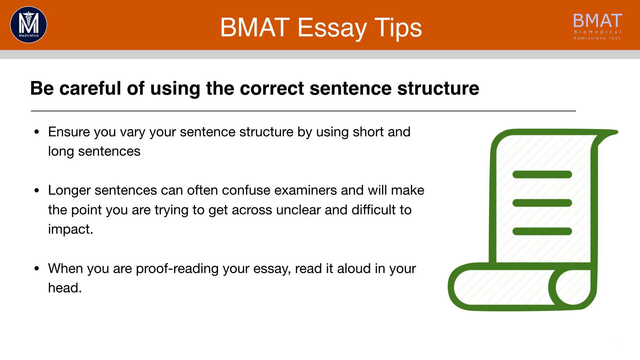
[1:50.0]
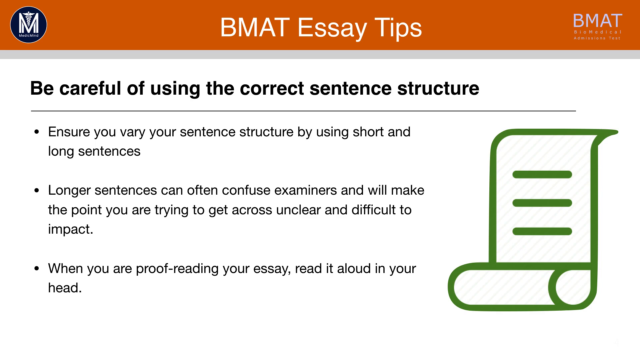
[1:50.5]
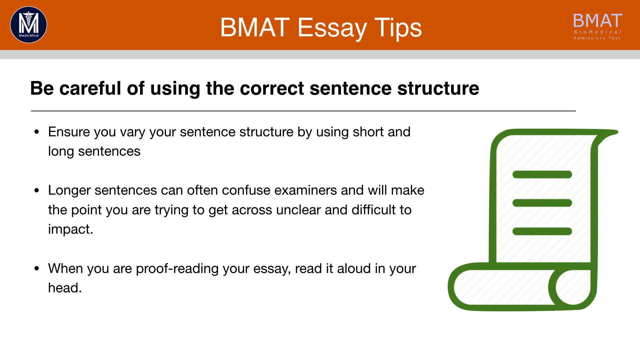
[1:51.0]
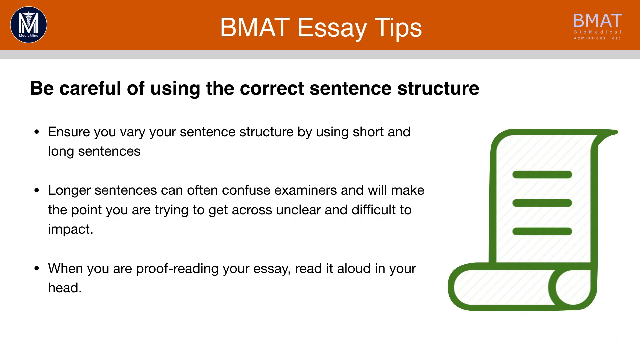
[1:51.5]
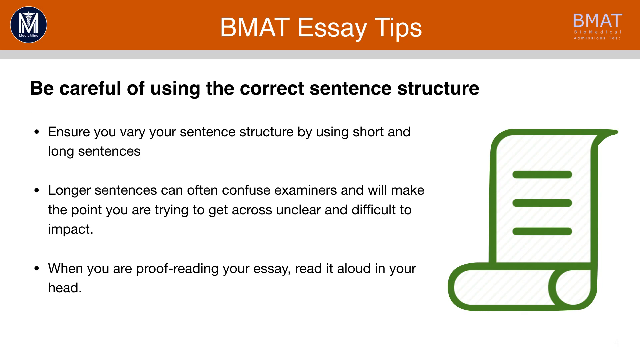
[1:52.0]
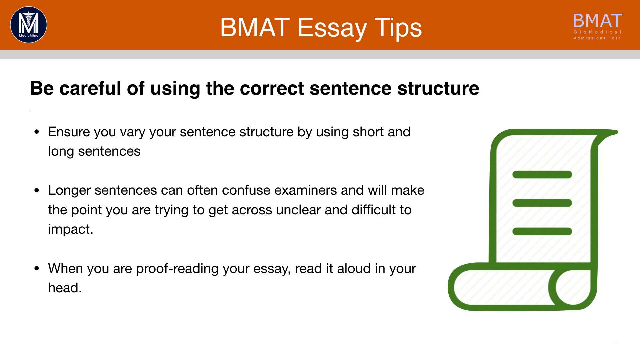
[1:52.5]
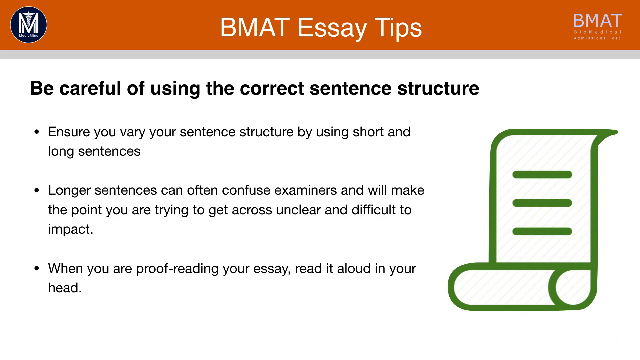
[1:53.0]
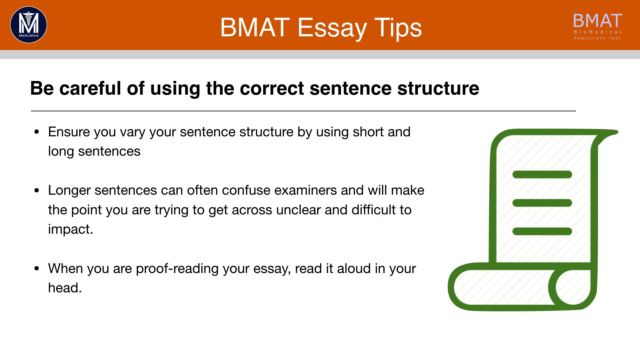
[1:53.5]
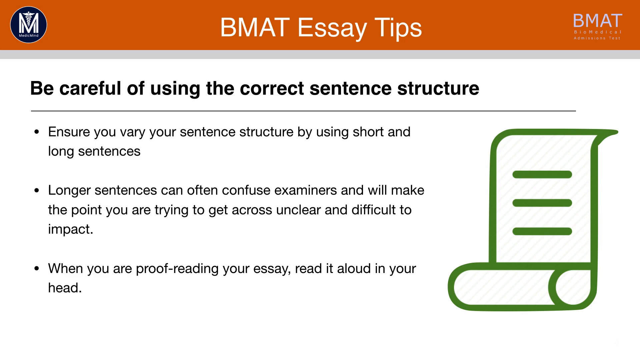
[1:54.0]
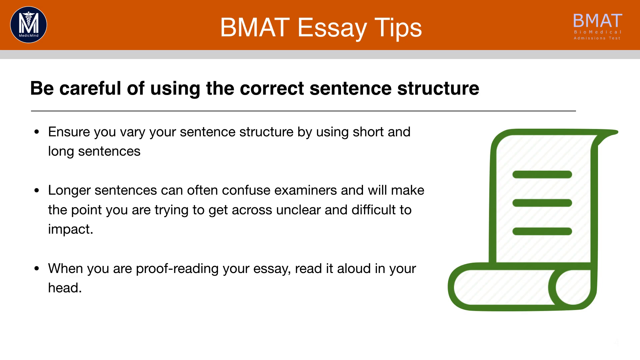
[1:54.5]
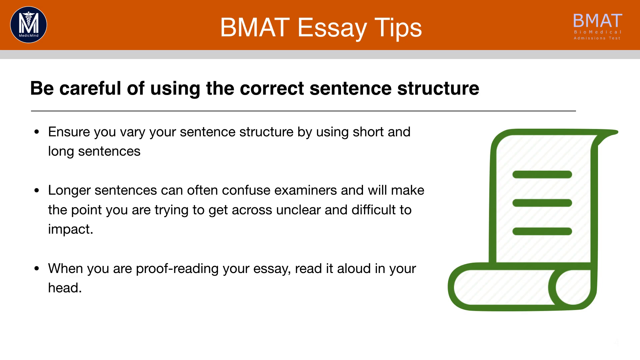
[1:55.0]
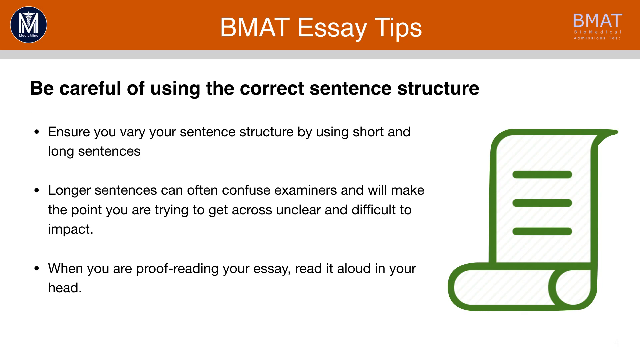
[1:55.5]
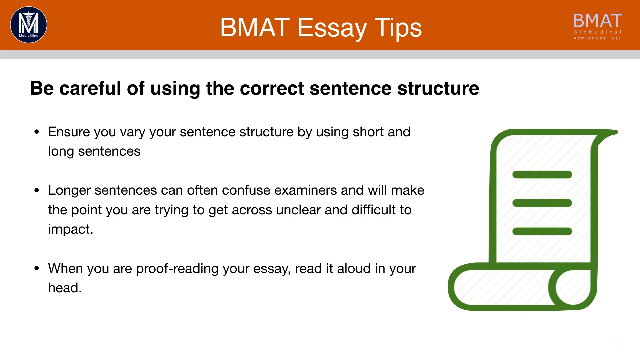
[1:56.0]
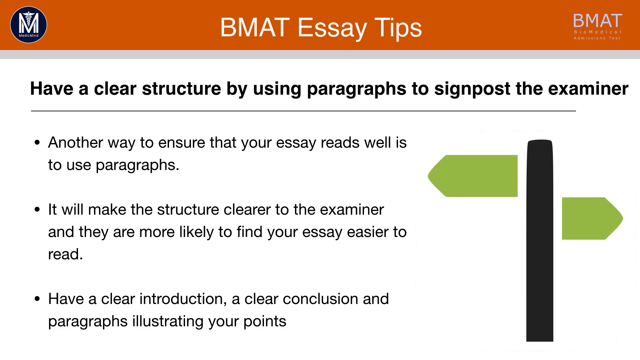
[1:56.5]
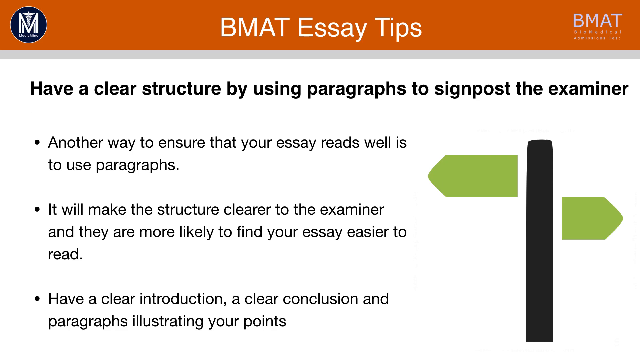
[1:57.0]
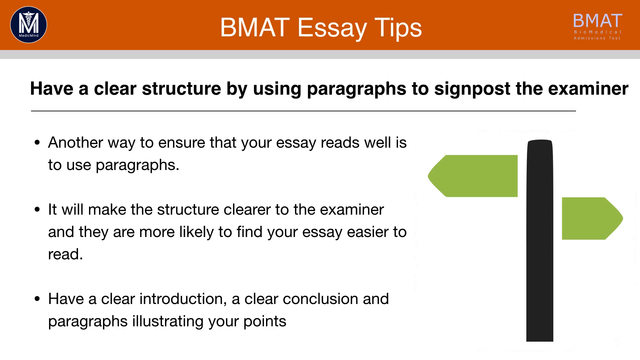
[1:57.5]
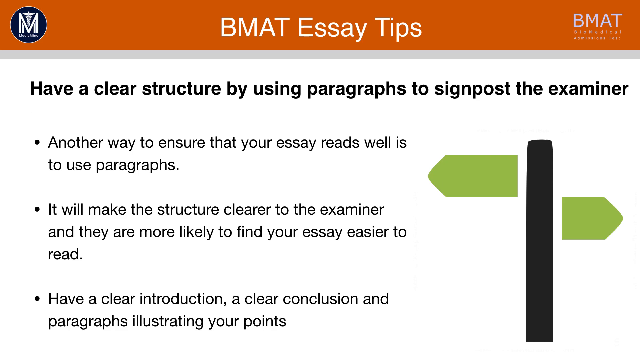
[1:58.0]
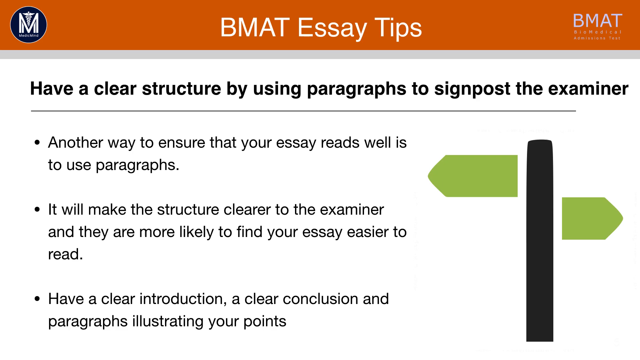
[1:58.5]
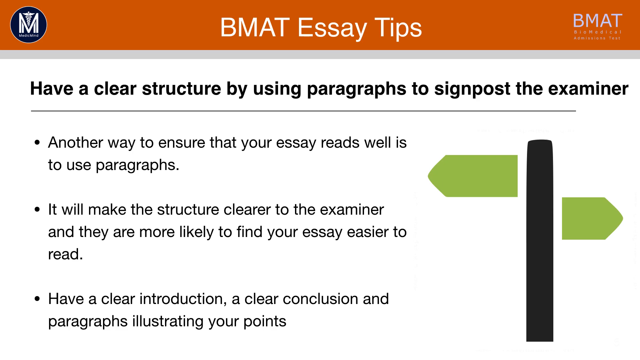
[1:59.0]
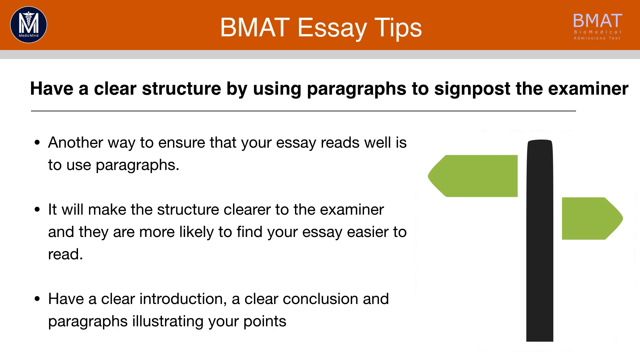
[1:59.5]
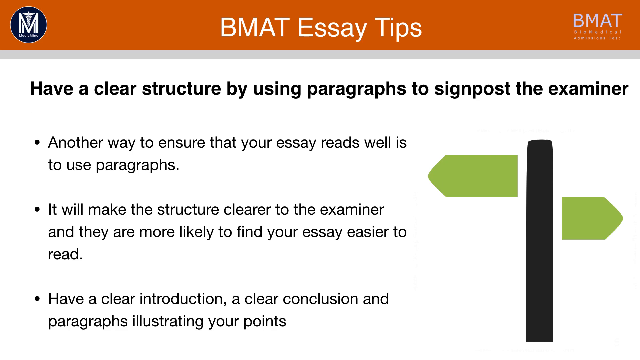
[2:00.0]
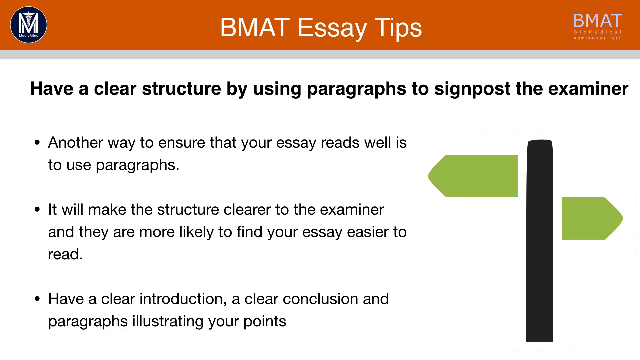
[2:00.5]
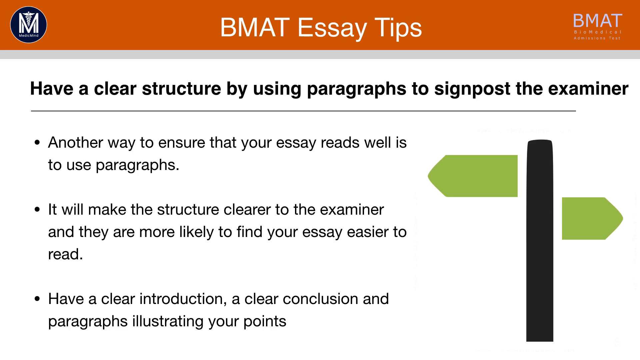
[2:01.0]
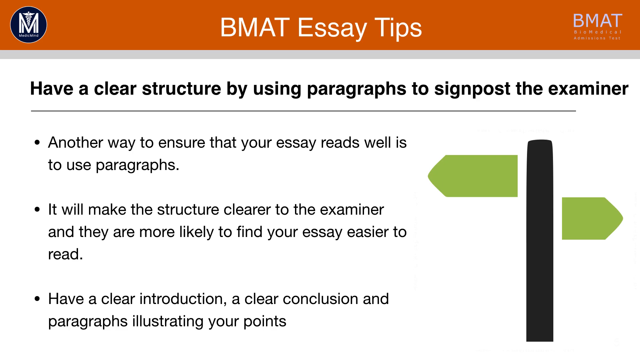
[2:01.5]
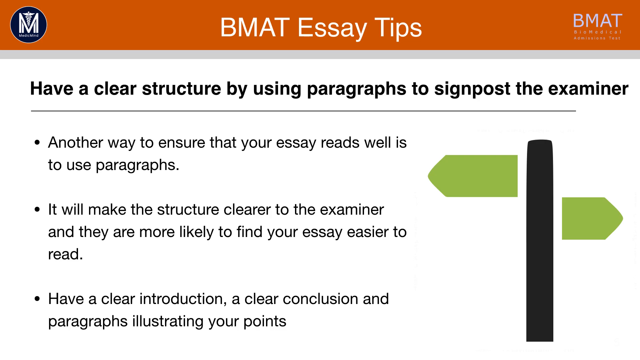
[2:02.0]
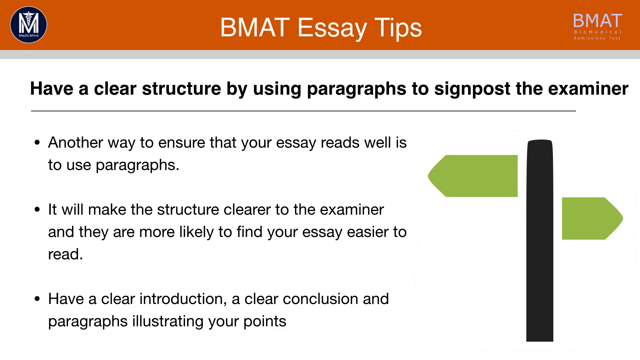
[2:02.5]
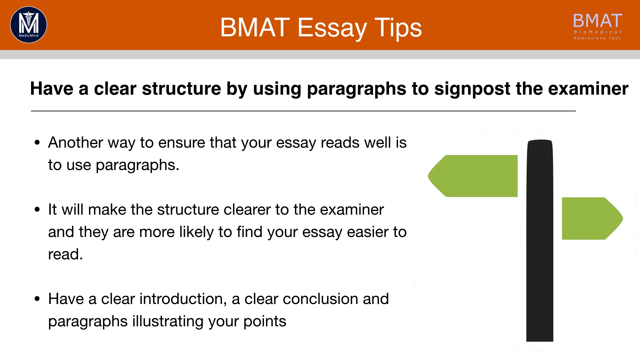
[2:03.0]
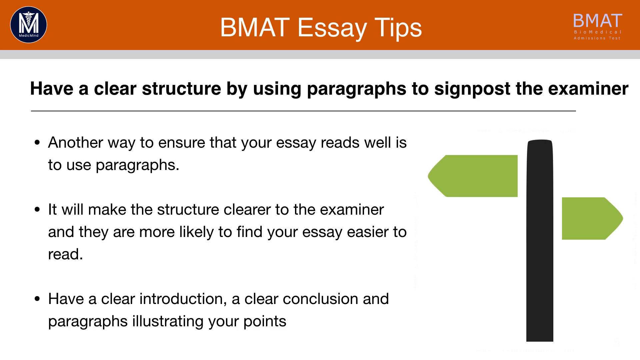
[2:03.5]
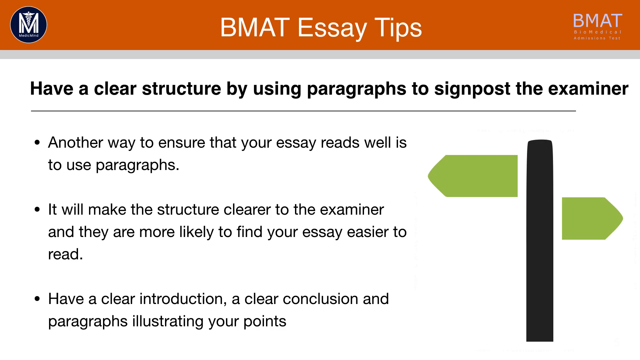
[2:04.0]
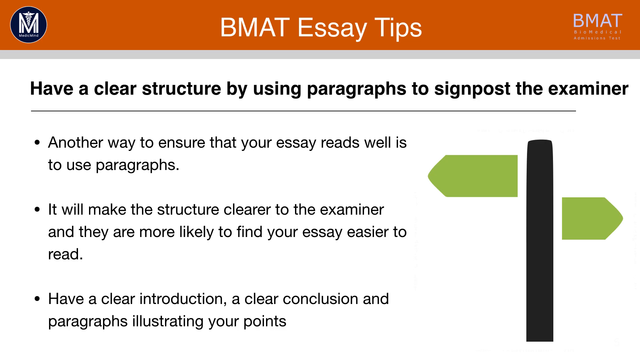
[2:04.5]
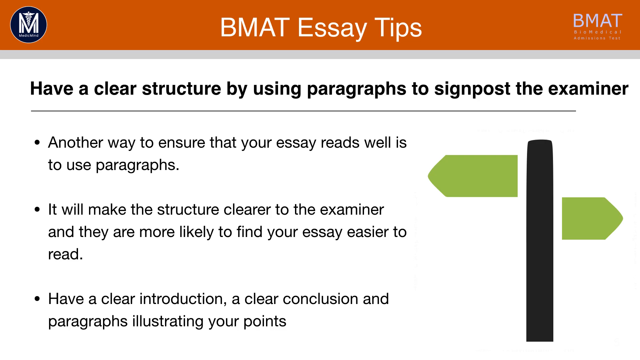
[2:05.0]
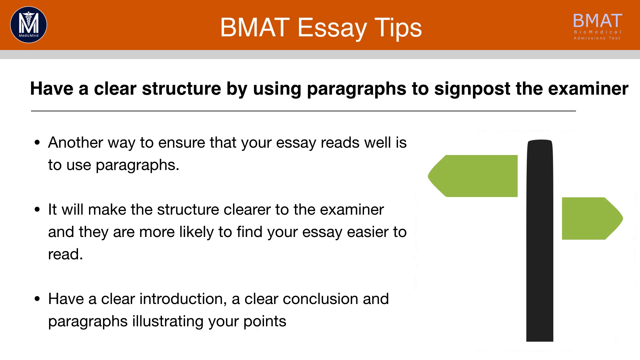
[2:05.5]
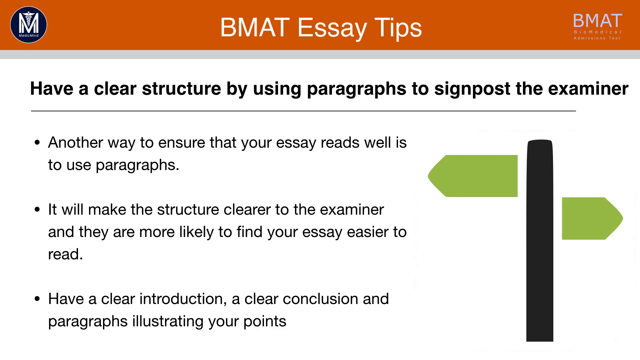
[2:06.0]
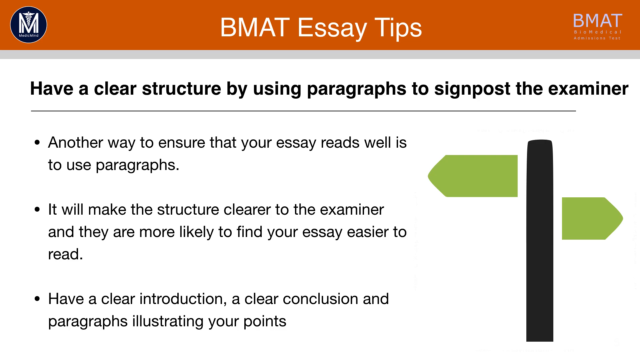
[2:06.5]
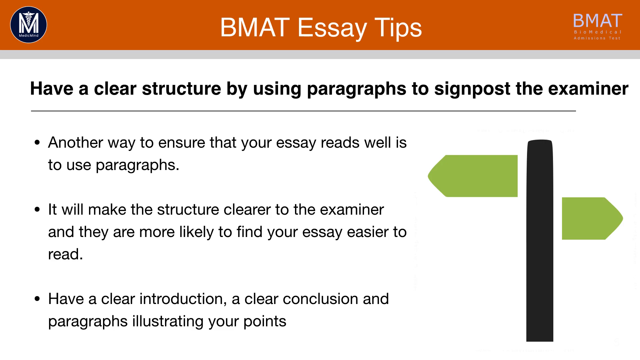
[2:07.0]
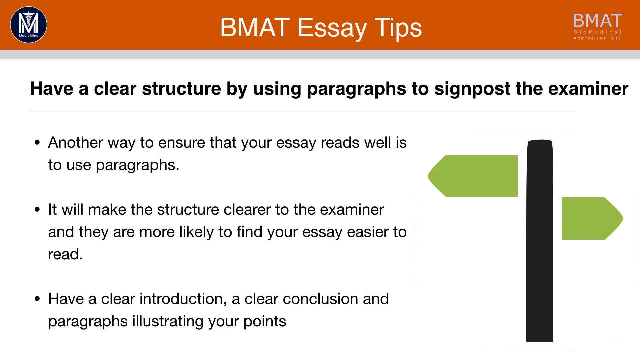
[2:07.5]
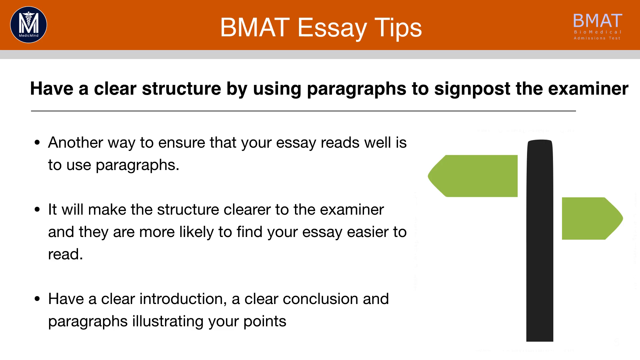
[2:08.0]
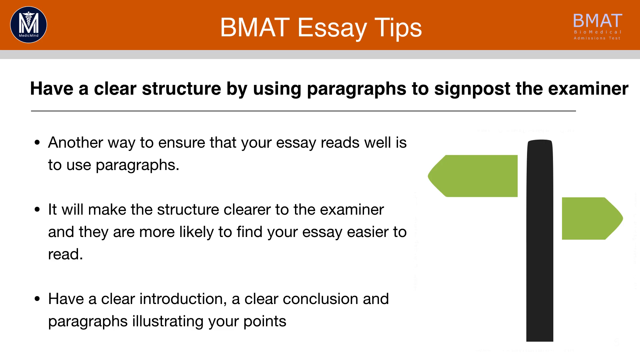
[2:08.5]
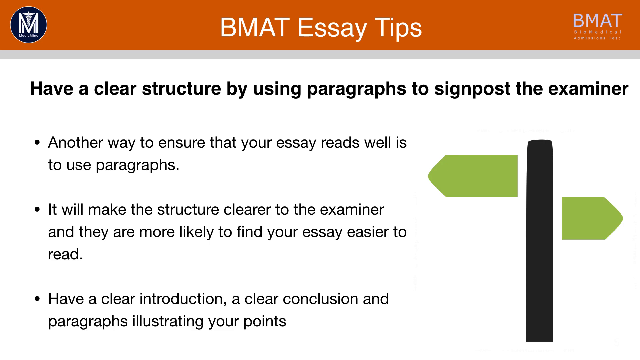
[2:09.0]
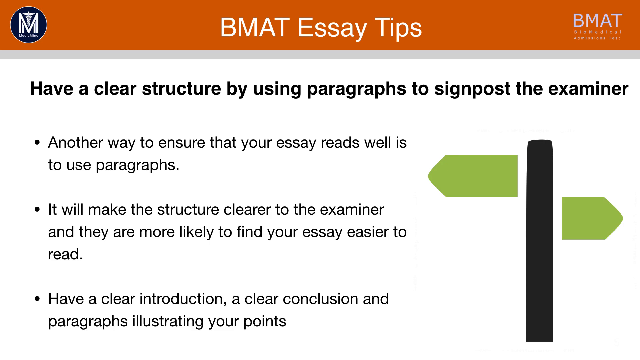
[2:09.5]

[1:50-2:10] The same slide remains unchanged, with the orange overlay at the top and the orange document. After 5 seconds it changes to a new slide, again with the orange overlay, the white and blue logo at the top left and the BMAT logo at the top right. Black text below reads "have a clear structure by using paragraphs to signpost the examiner", with three bullet points of helpful information below. On the right side of the screen is a new signpost-like logo, a large rectangular box with two green shapes pointing off it like a signpost. This remains on screen for the rest of the section. Most of the screen is still white, with the text and logo the only things taking up space on the slide.